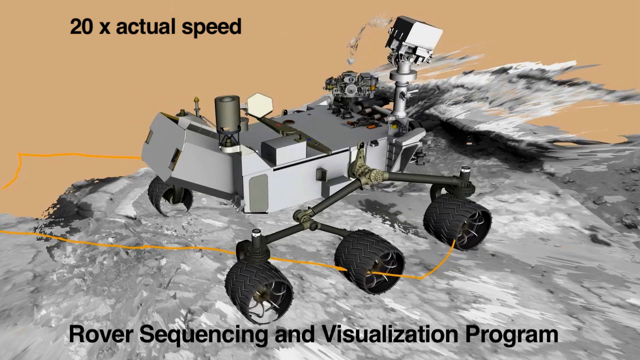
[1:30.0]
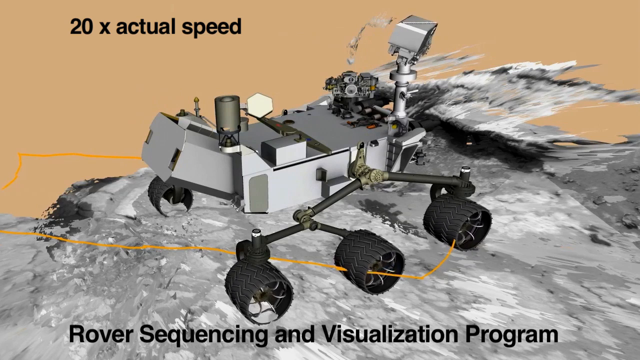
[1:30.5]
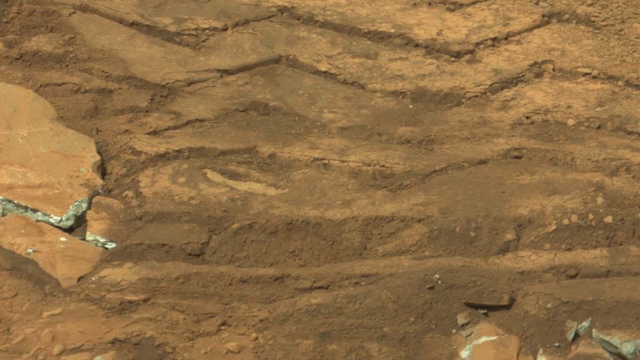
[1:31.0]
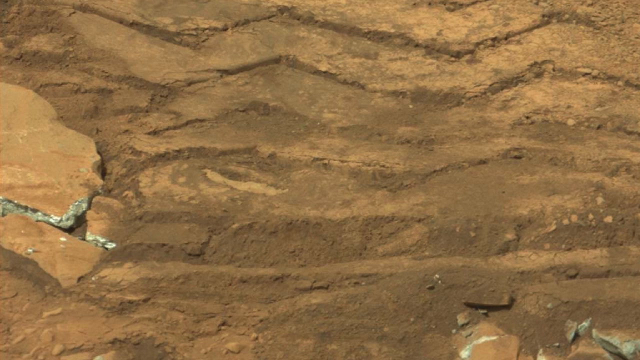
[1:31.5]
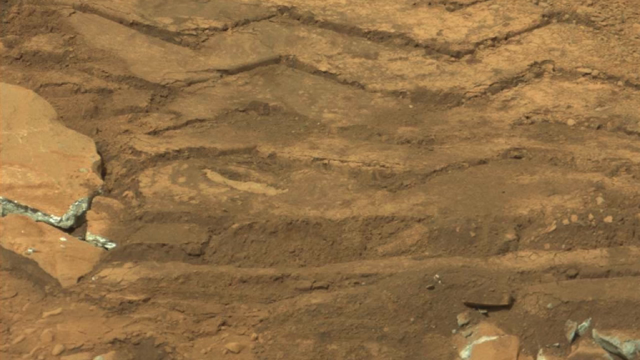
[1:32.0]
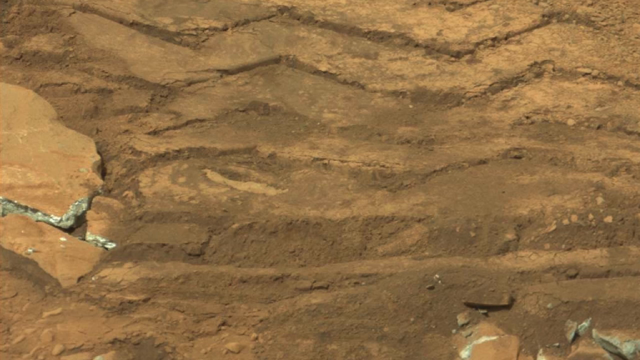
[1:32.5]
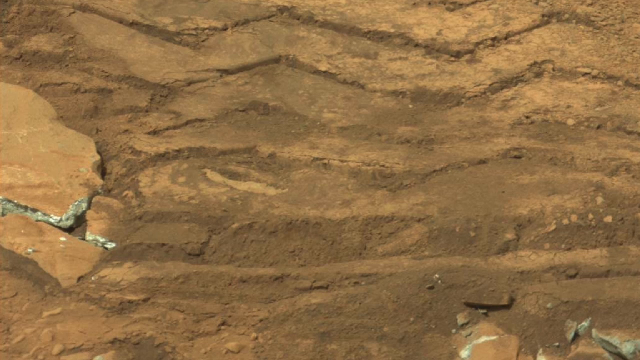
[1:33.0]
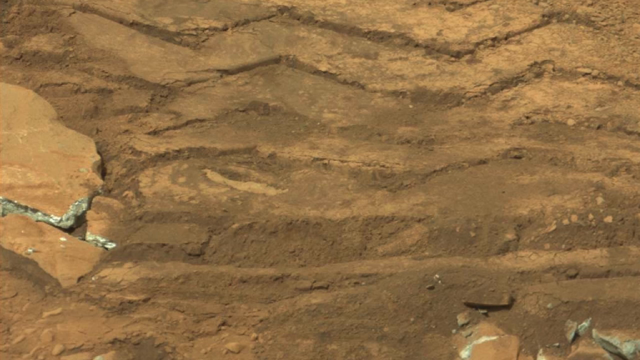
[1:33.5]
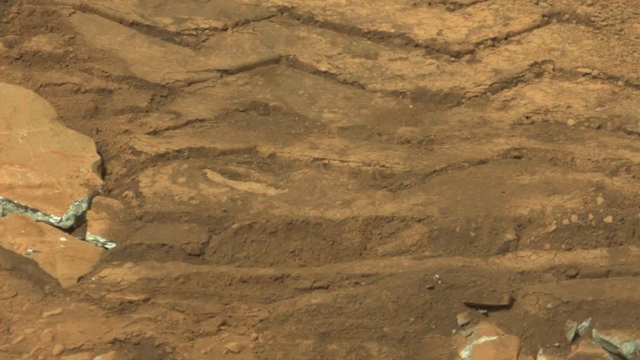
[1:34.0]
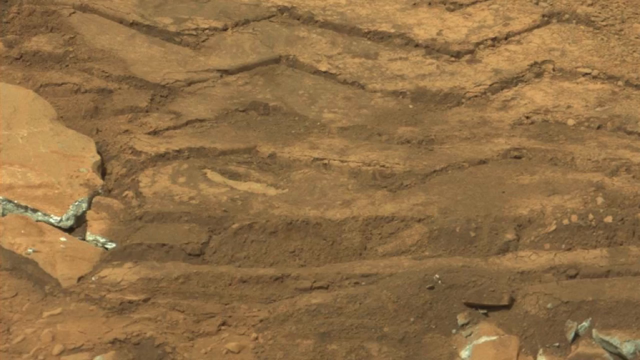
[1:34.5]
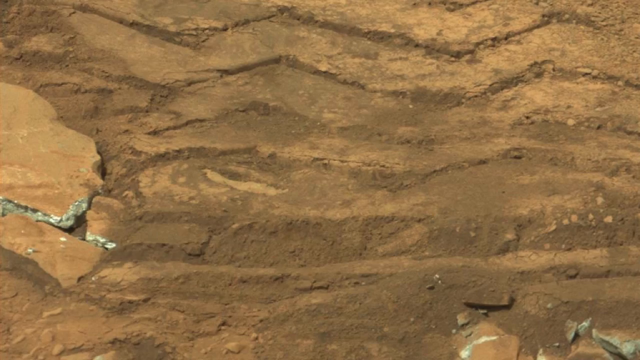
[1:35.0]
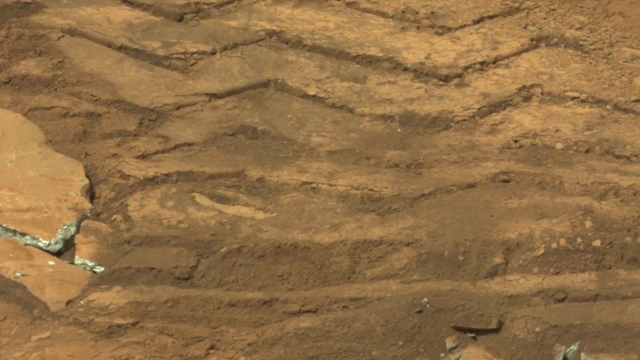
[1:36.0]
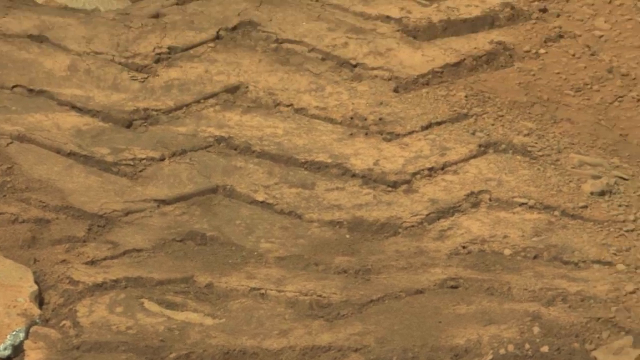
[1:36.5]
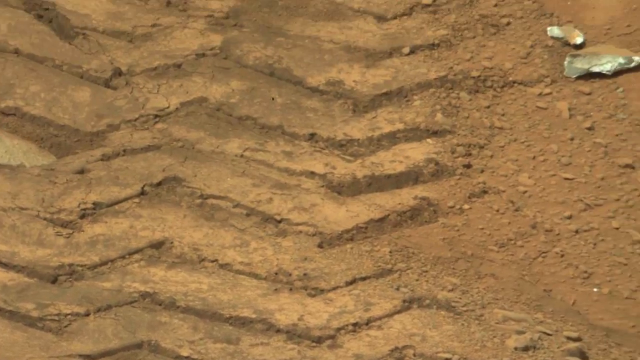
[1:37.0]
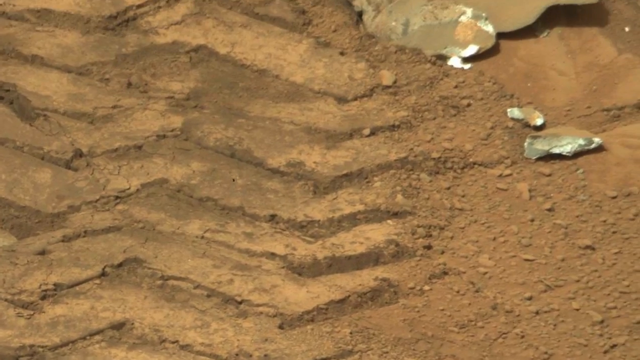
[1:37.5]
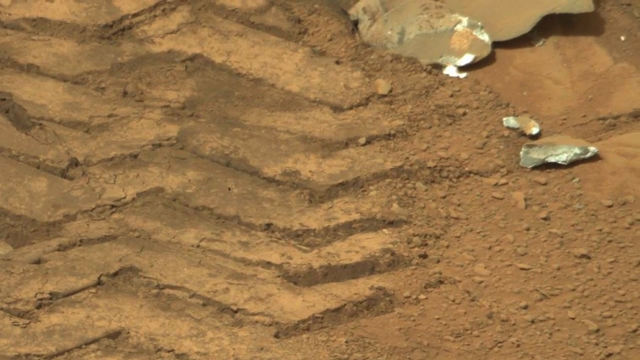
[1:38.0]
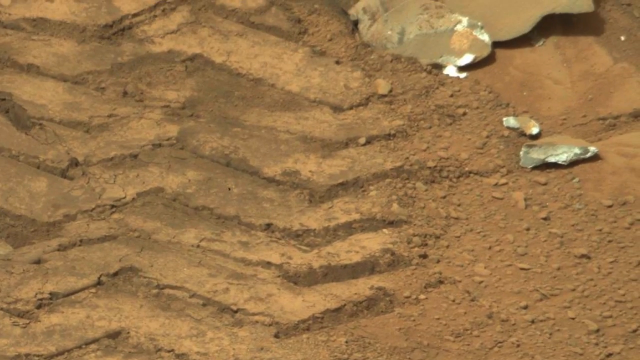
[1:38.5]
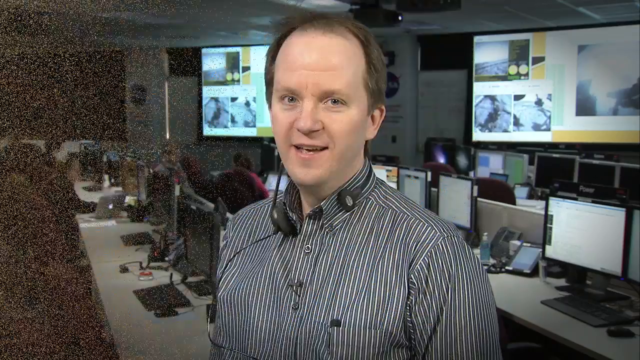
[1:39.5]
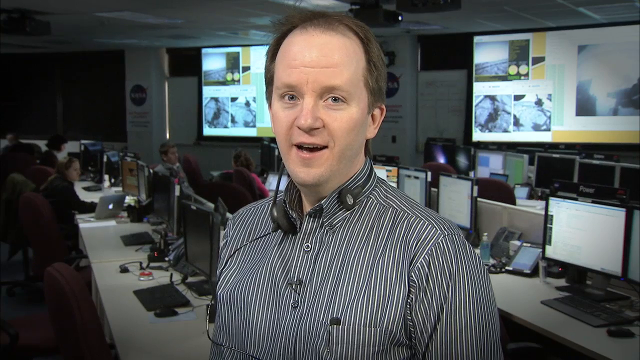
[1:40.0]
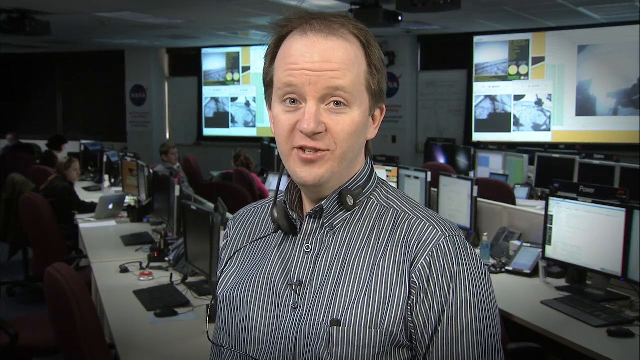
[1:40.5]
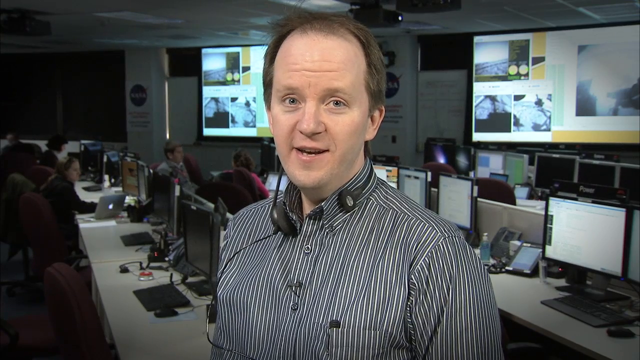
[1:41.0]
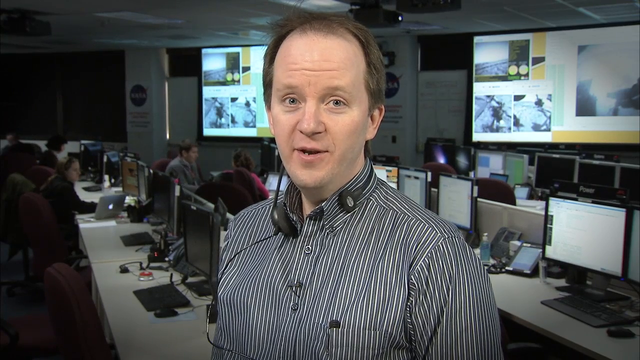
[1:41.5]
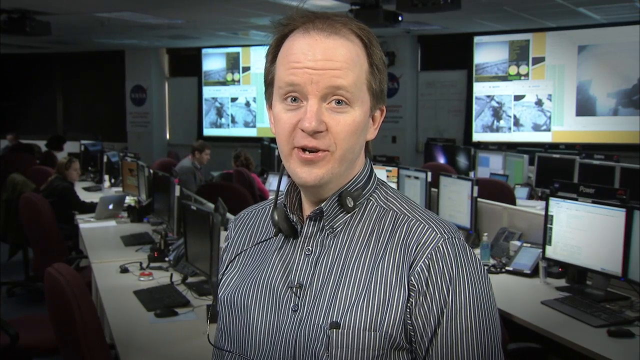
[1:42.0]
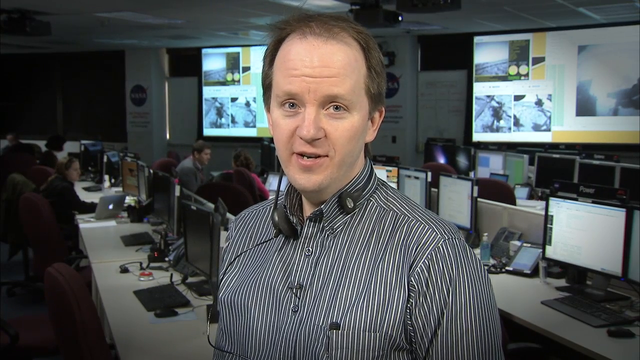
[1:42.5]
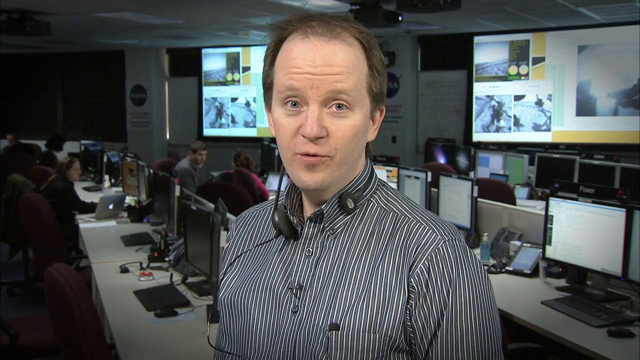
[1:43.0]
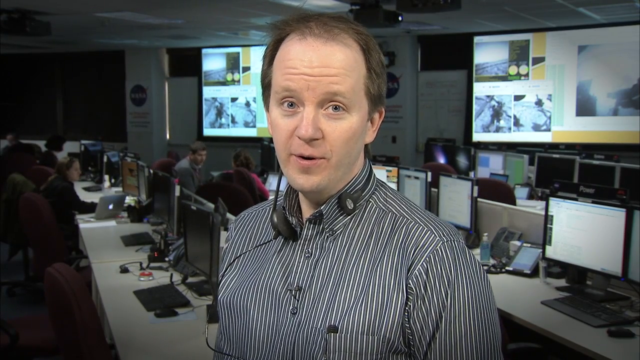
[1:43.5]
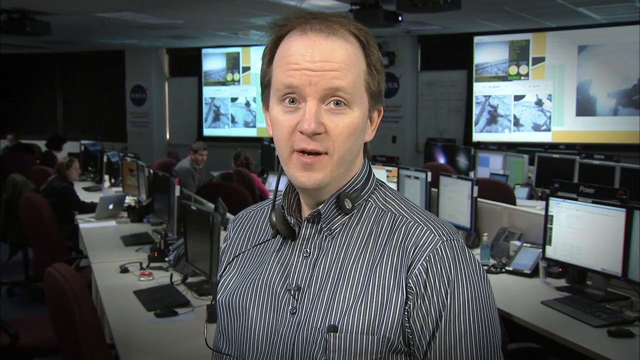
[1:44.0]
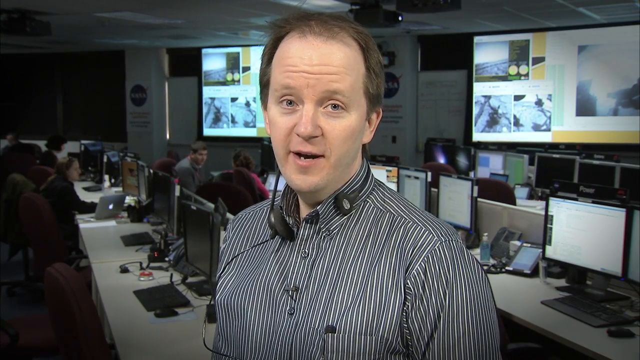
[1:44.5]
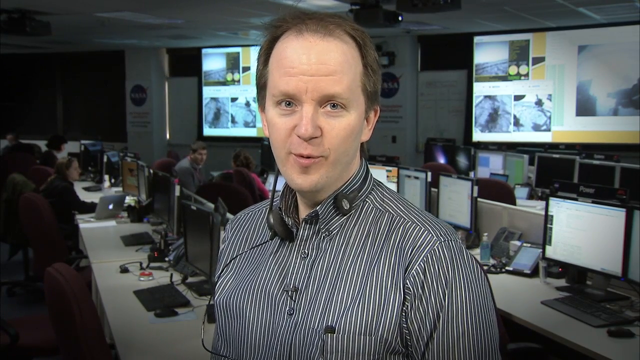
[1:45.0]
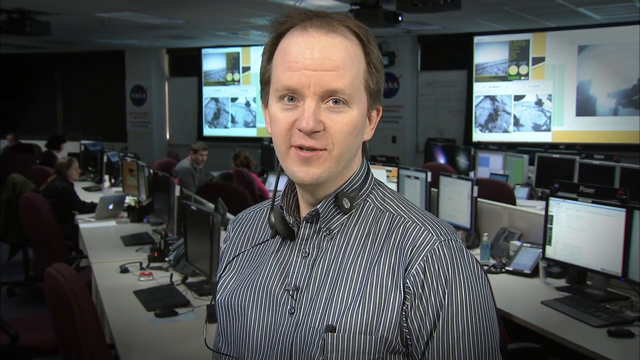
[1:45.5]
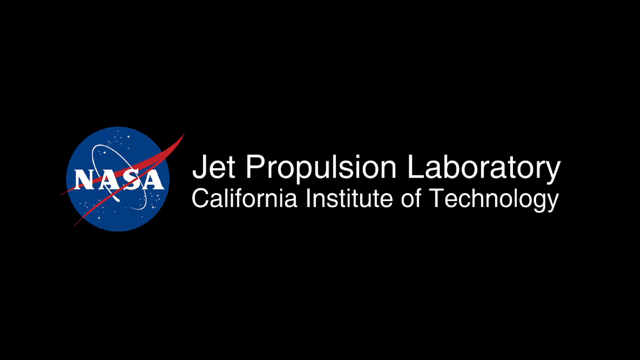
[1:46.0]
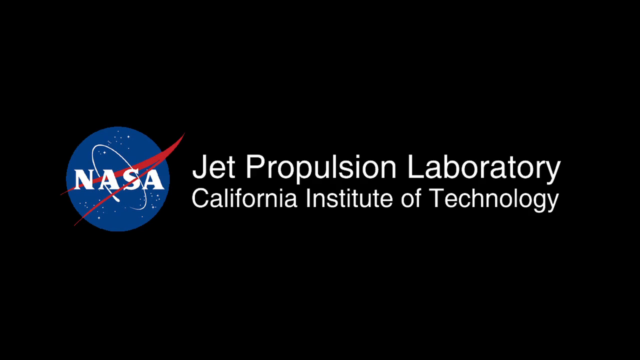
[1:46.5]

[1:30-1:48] More shots of the Mars rover appear, including what almost looks like a tire tread, possibly on the surface of Mars, though the perspective of the image is unclear. The surface is sort of reddish tan and looks somewhat dusty. In another part of the video, a gentleman in a black and white vertically striped button-down shirt speaks to the camera. He is standing in the middle of a control room with lots of computers and computer monitors, with several people sitting at the desks looking at the monitors. In the background are two large overhead screens showing video, presumably the visuals the Mars rover is sending to Earth. At the very end of the video, the words on the screen read "Jet Propulsion Laboratory, California Institute of Technology".